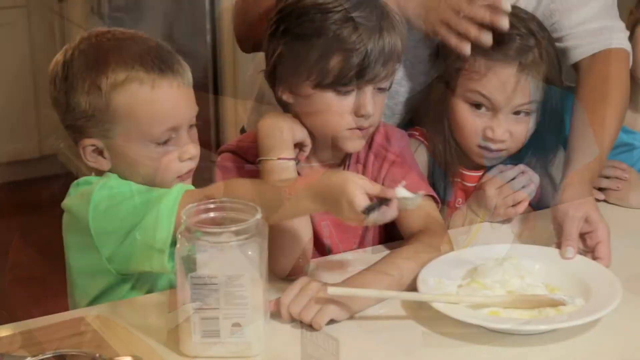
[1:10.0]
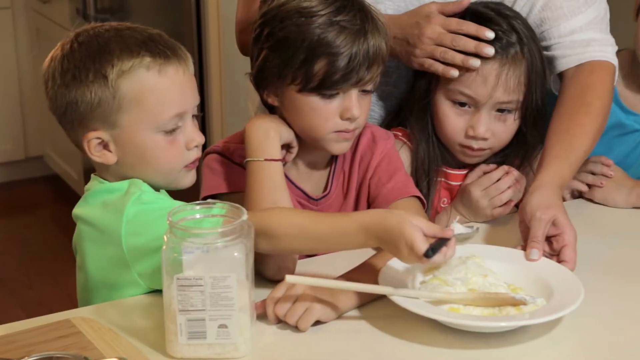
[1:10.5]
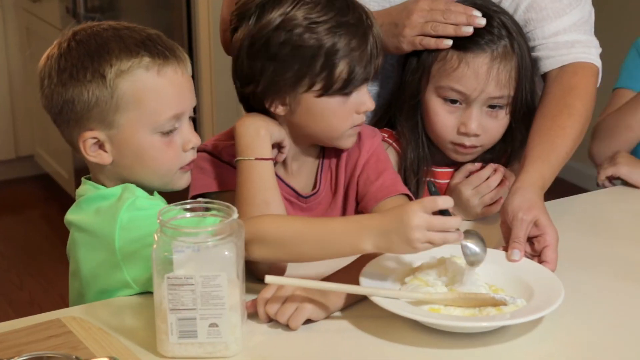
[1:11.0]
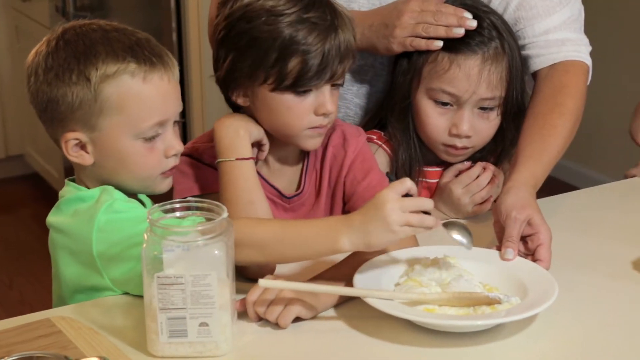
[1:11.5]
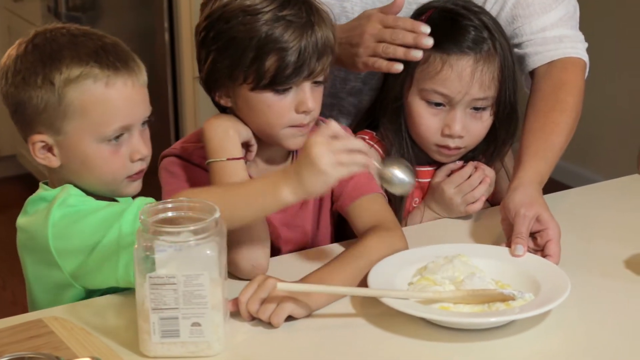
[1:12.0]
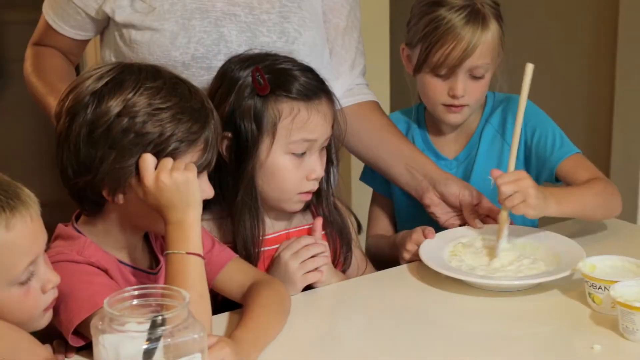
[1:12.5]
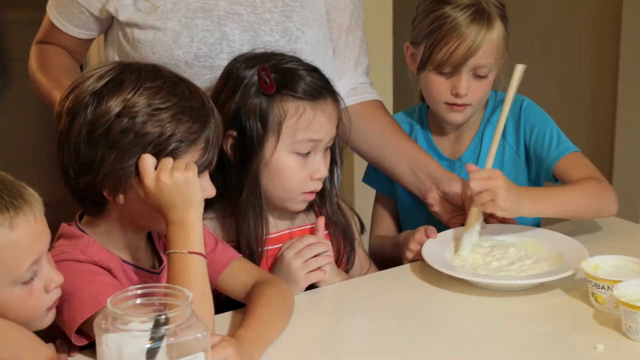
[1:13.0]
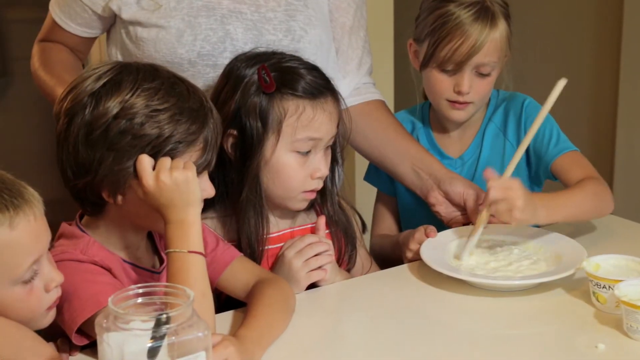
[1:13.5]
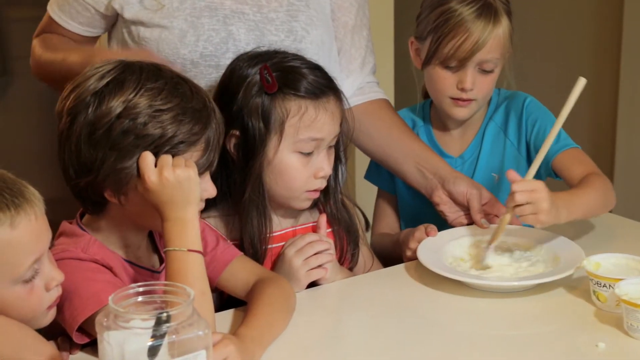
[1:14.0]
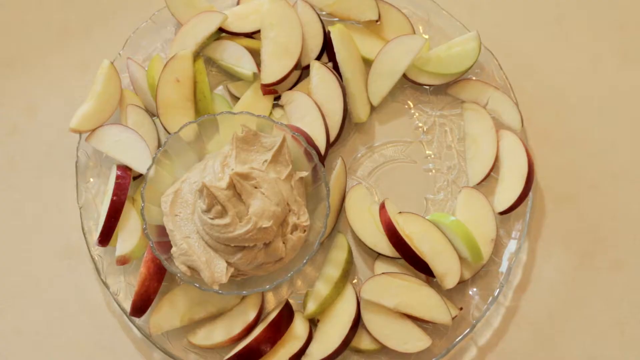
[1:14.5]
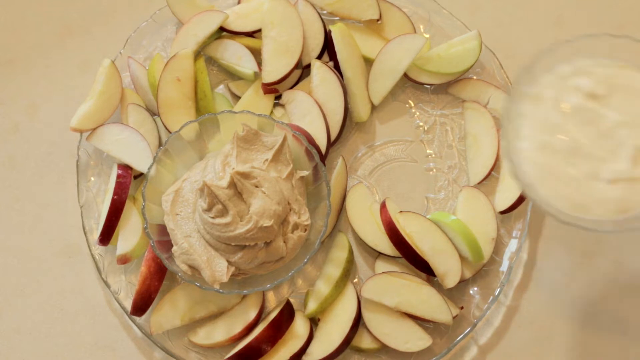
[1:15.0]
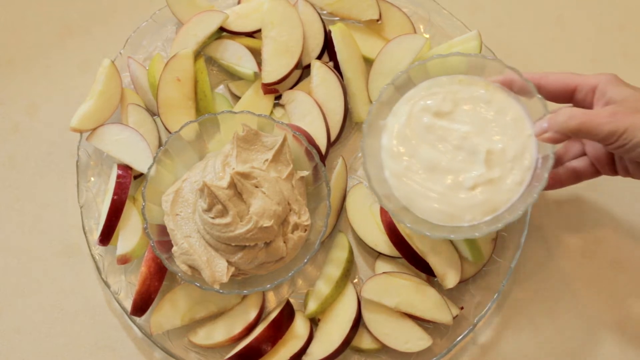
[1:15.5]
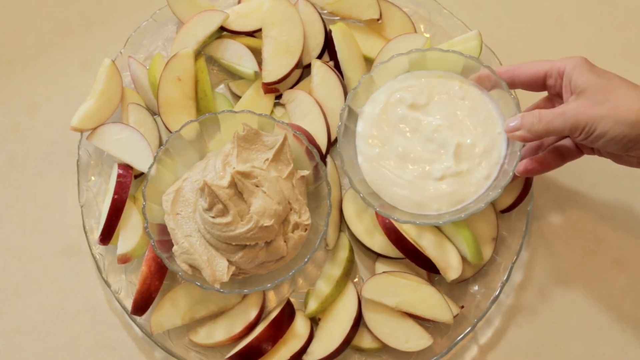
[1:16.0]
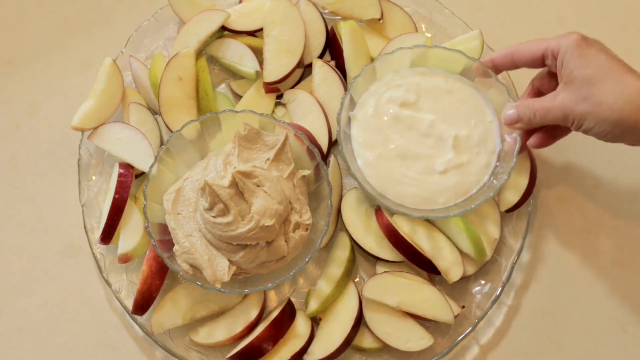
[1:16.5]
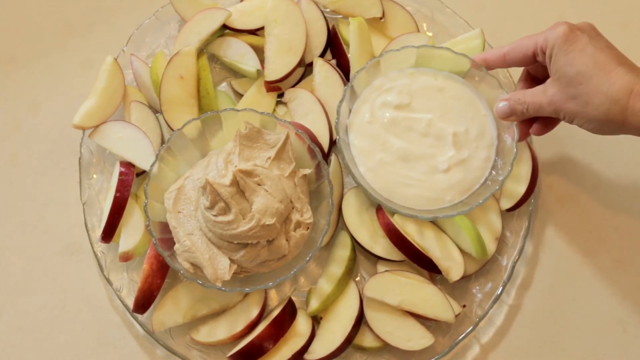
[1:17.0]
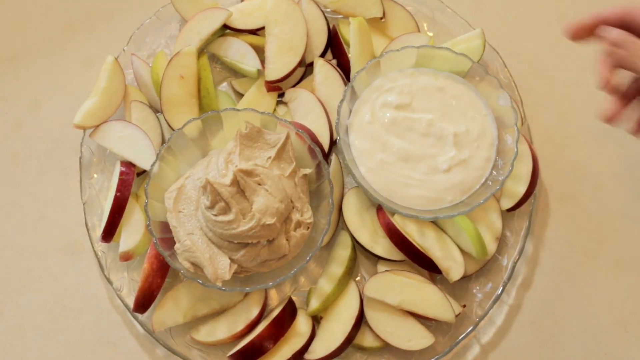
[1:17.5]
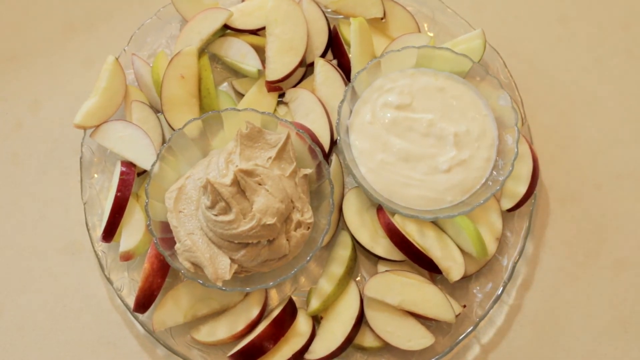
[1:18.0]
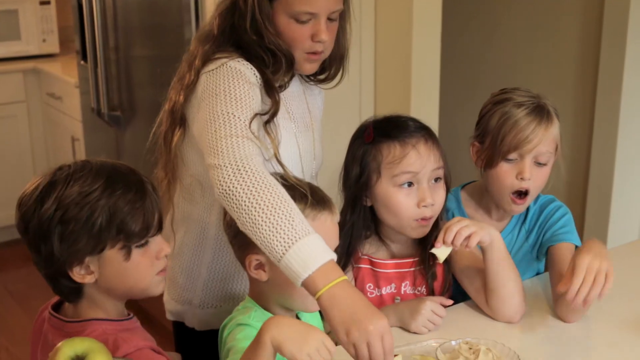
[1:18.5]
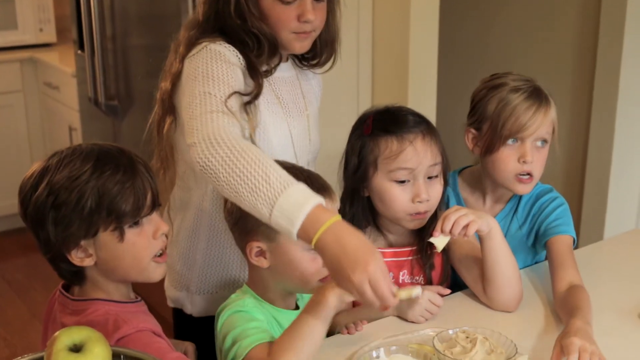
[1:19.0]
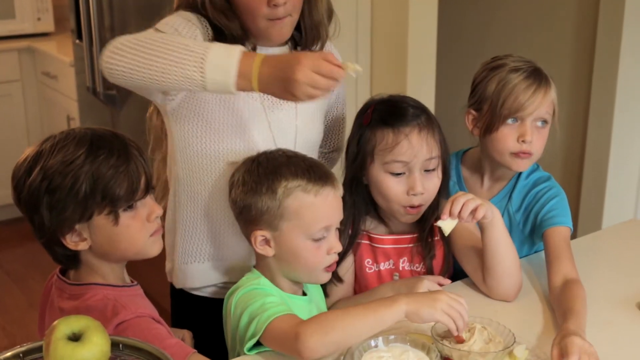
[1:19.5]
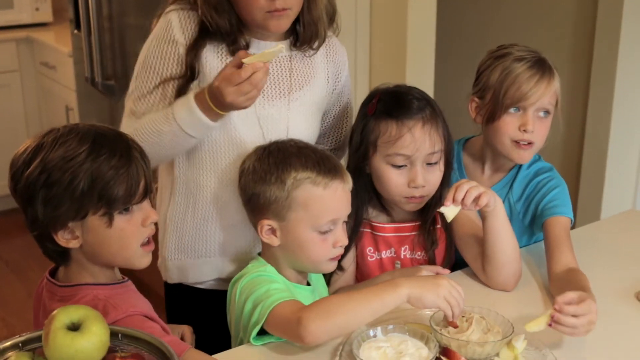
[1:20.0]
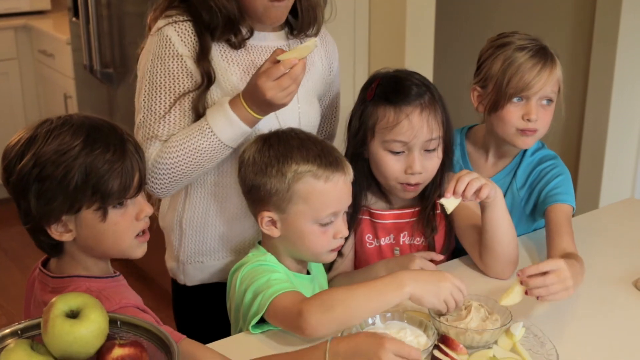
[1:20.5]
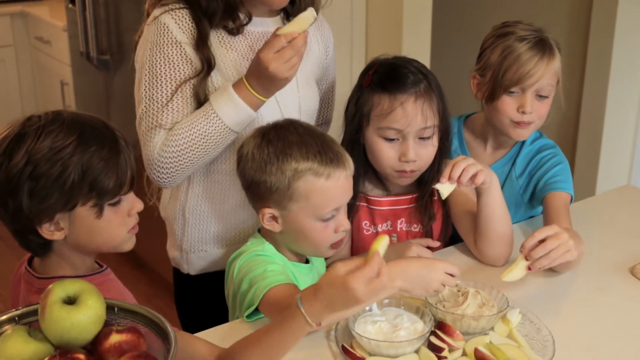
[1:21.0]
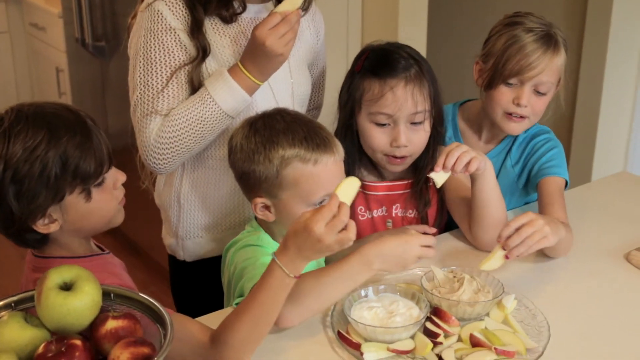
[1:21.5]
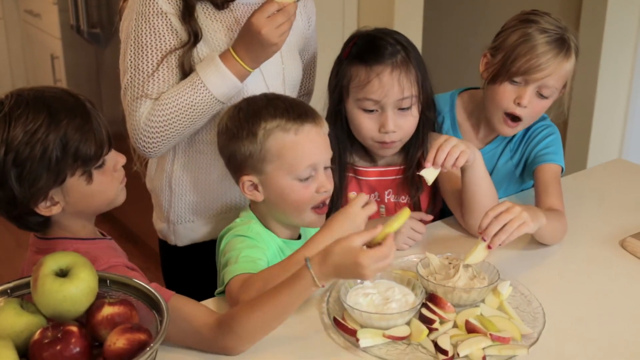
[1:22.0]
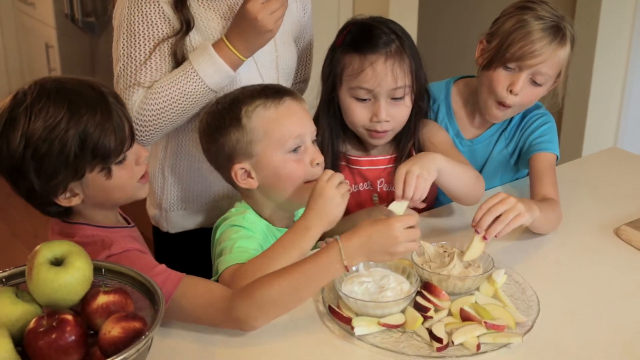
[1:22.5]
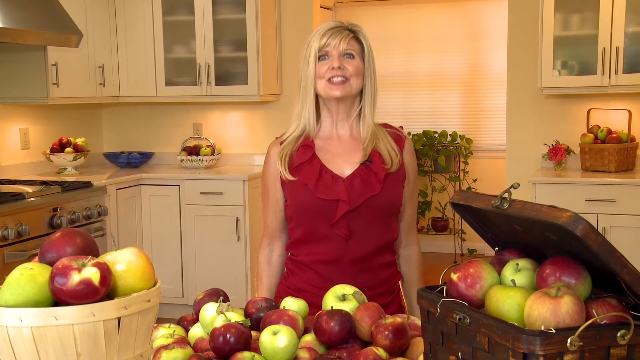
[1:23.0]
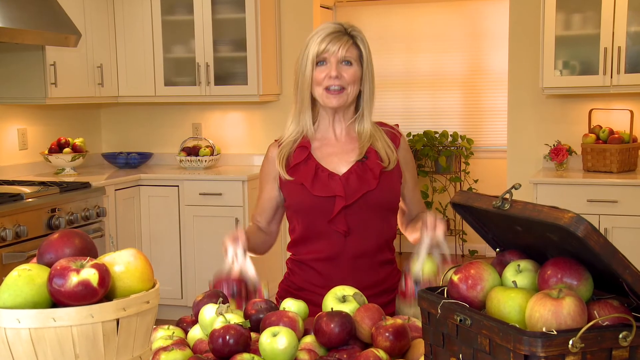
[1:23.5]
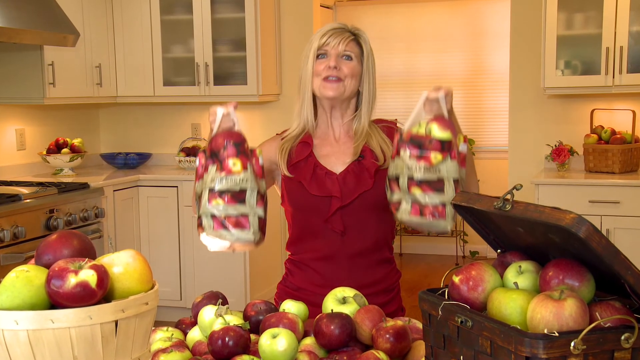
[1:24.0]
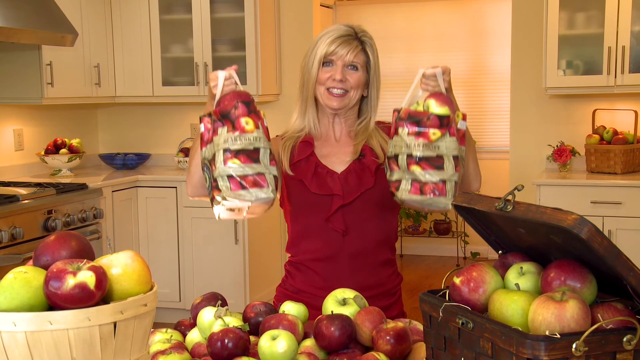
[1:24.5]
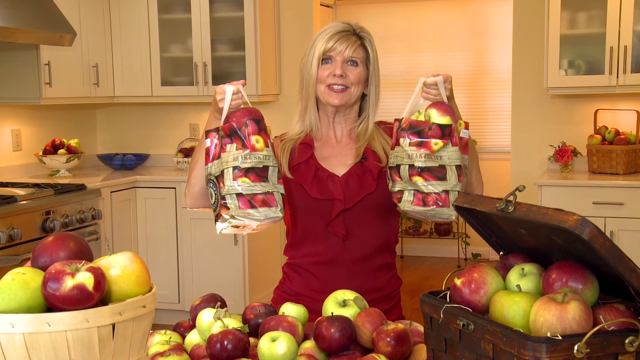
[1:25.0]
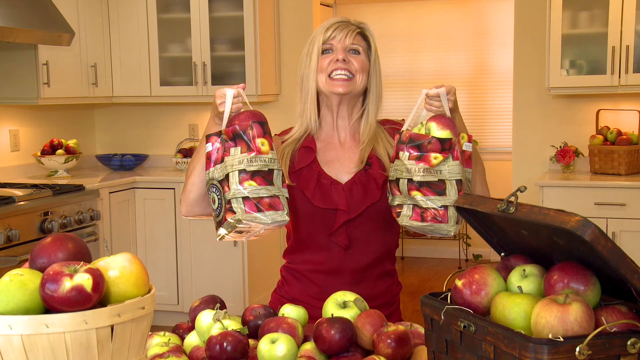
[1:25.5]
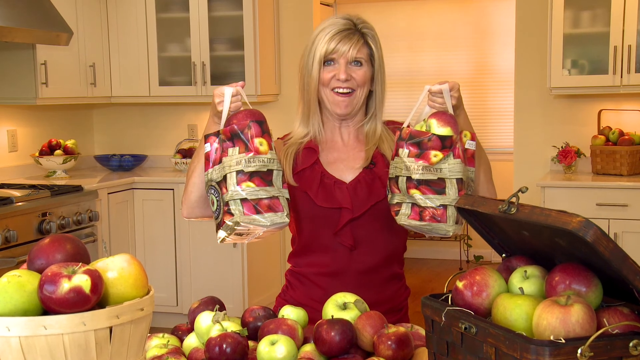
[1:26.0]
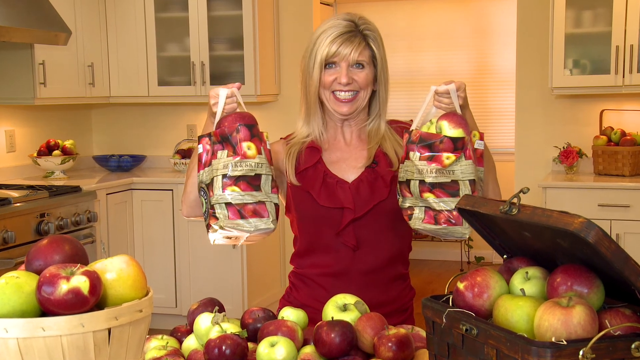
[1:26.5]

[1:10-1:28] All of the children stand around the counter in the kitchen, everyone contributing. A little boy in a green shirt uses a measuring spoon to add to the bowl. There is a boy in a reddish pink shirt and a girl with long brown hair. The adult holds the girl's hair back, probably to keep it out of the food, and with her other, left hand holds the bowl for the child. She then holds the bowl for a girl with blonde hair and a blue t-shirt, who uses a wooden spoon to stir the mixture in the bowl. Next, a clear serving tray holds two clear bowls containing the two different dips from the recipes shown on screen, surrounded by apple slices. All five children then stand at the counter eating apples and dipping them into the two dips on the counter in front of them. Finally, the woman from the start of the video, with blonde hair and a red shirt, holds up two bags full of apples, with apples all around her in front of her on her kitchen counter.